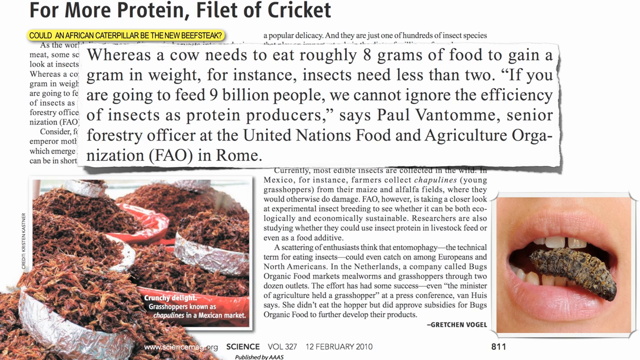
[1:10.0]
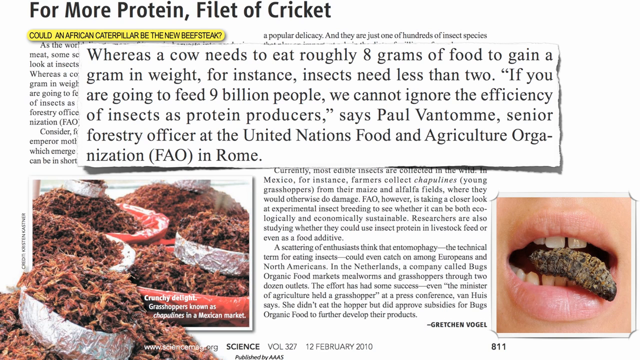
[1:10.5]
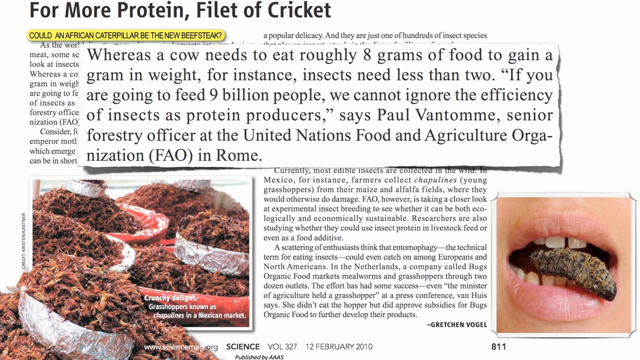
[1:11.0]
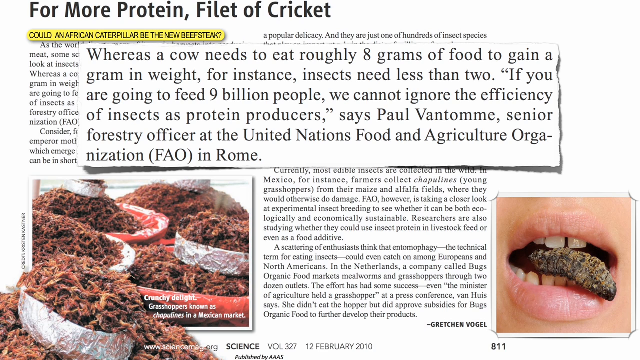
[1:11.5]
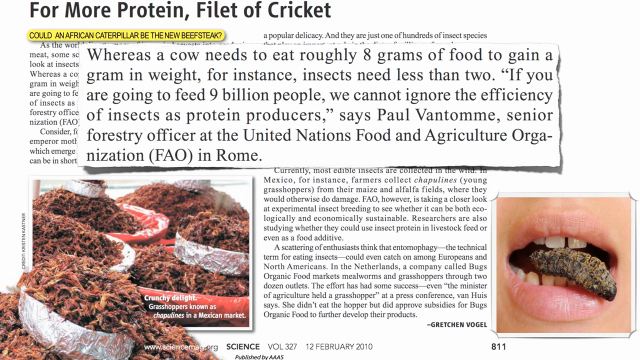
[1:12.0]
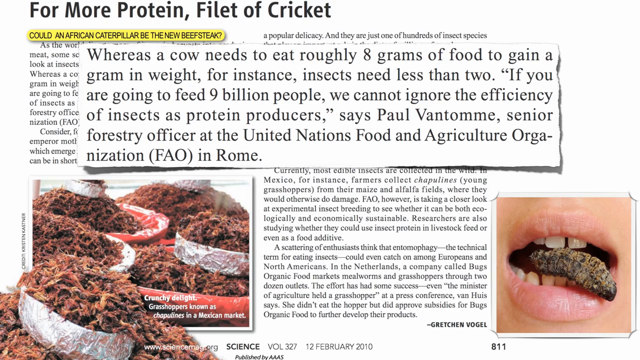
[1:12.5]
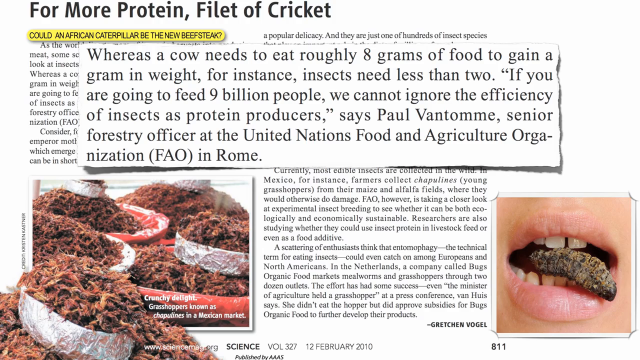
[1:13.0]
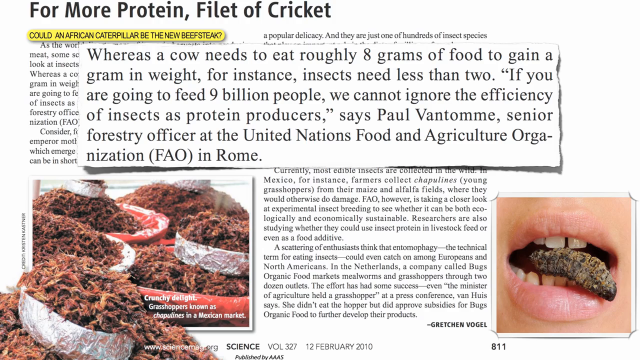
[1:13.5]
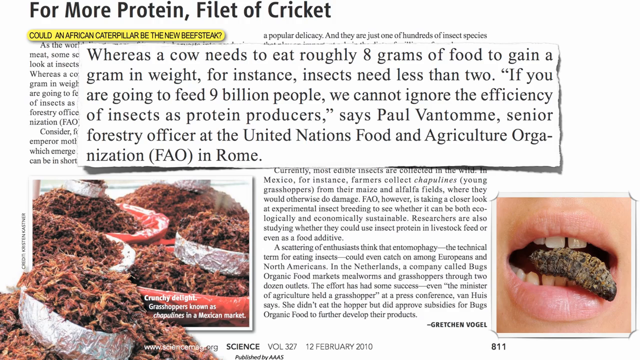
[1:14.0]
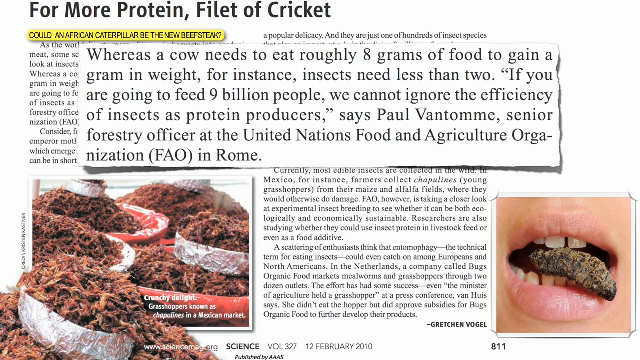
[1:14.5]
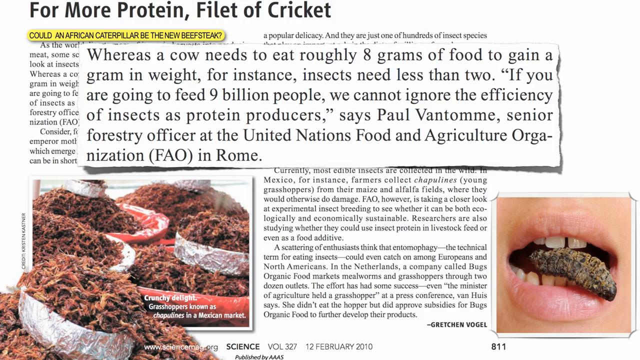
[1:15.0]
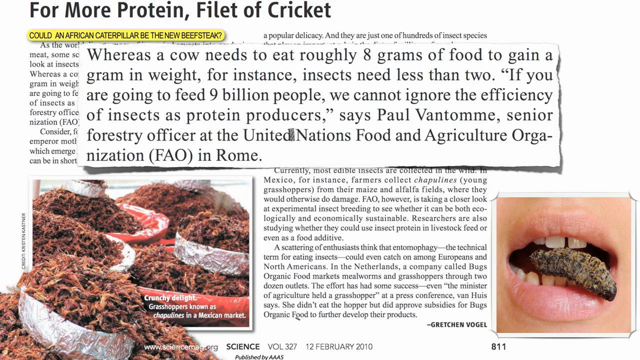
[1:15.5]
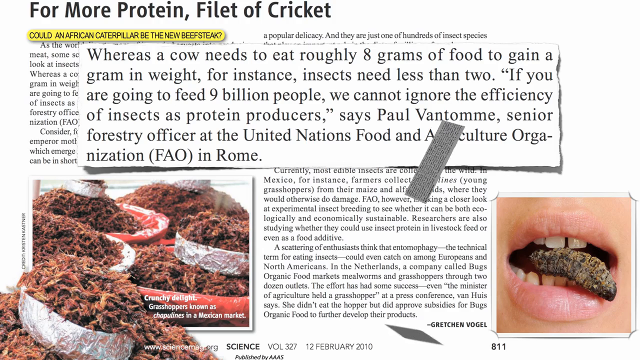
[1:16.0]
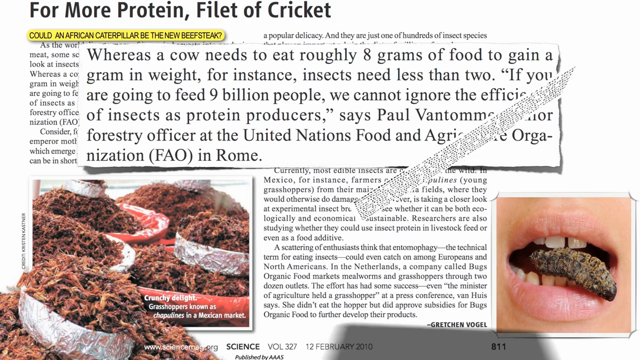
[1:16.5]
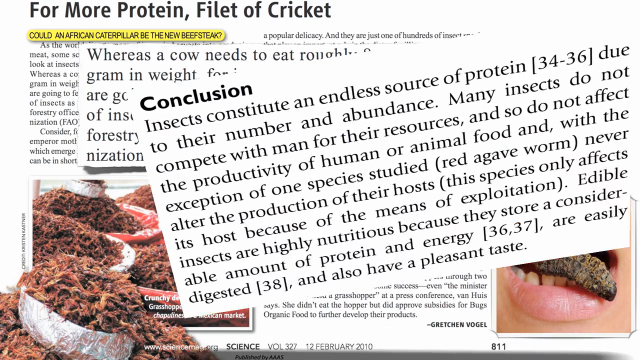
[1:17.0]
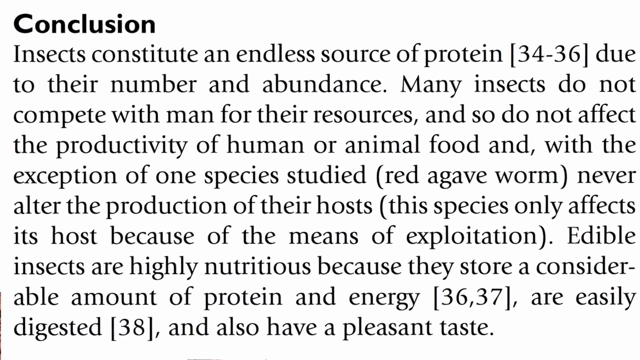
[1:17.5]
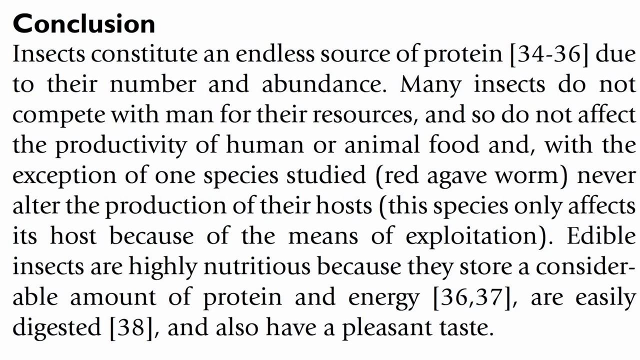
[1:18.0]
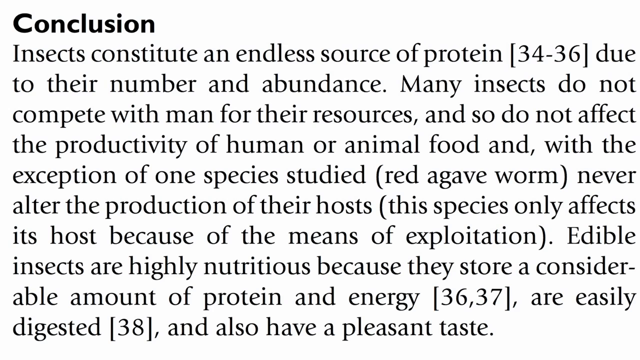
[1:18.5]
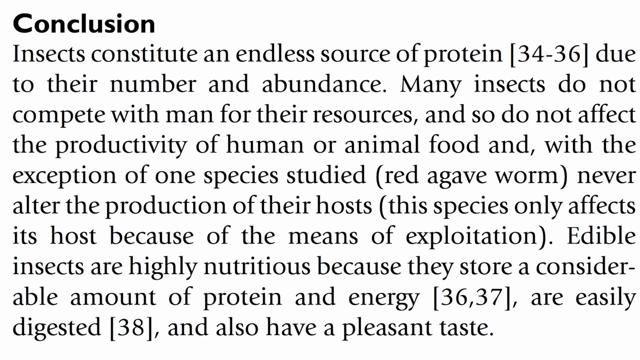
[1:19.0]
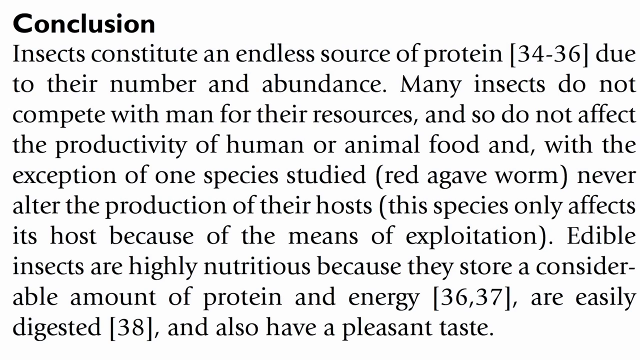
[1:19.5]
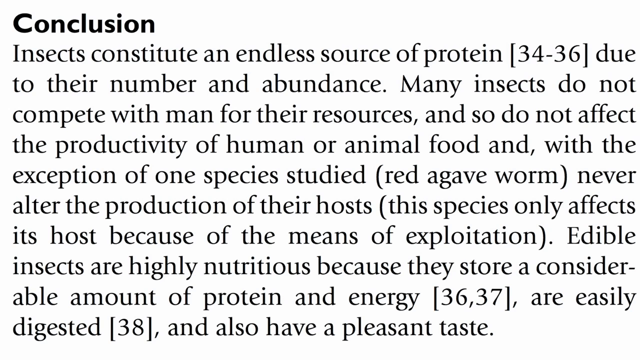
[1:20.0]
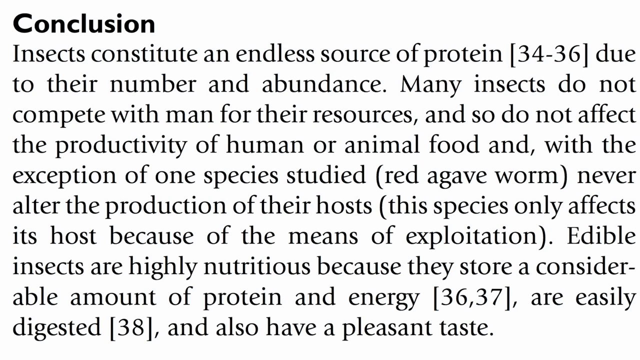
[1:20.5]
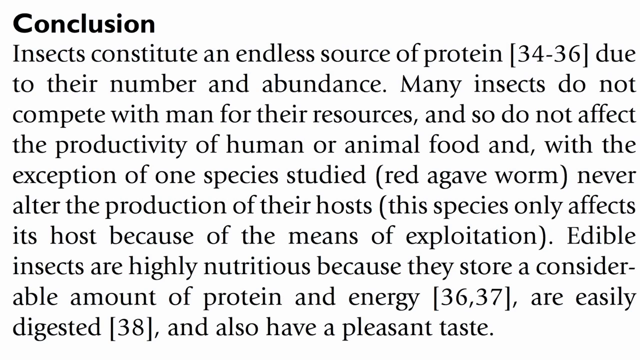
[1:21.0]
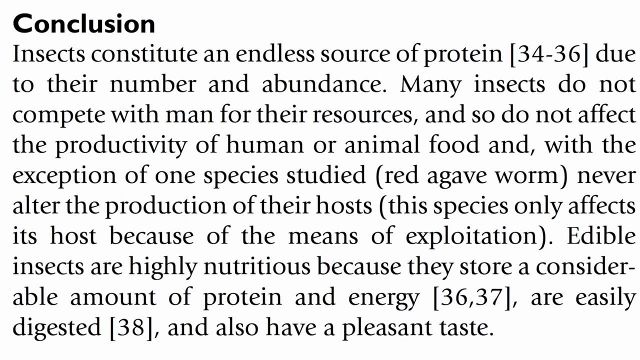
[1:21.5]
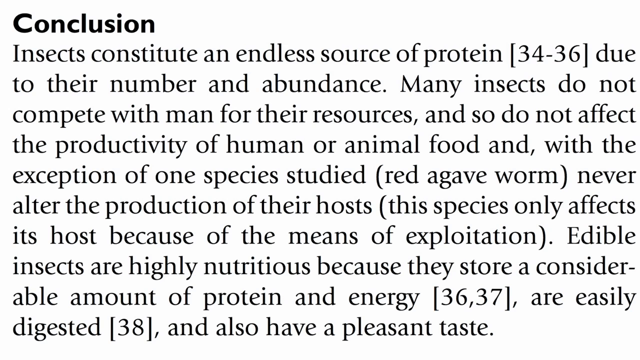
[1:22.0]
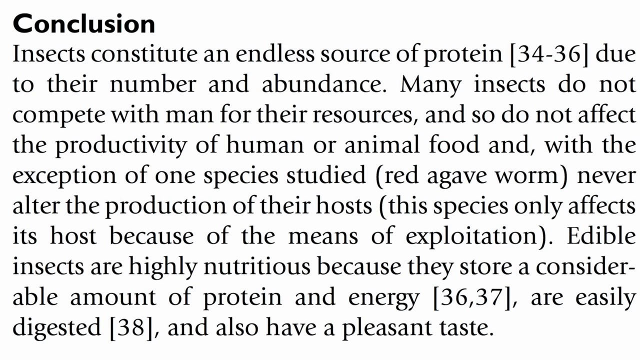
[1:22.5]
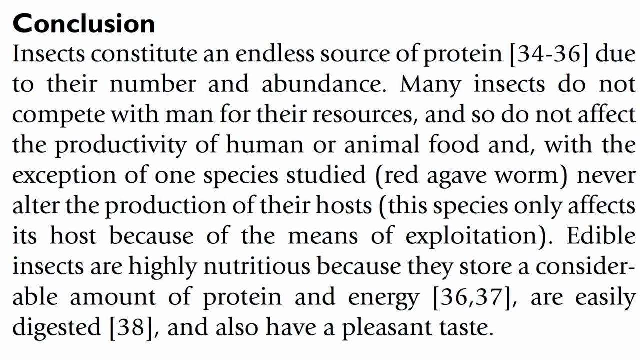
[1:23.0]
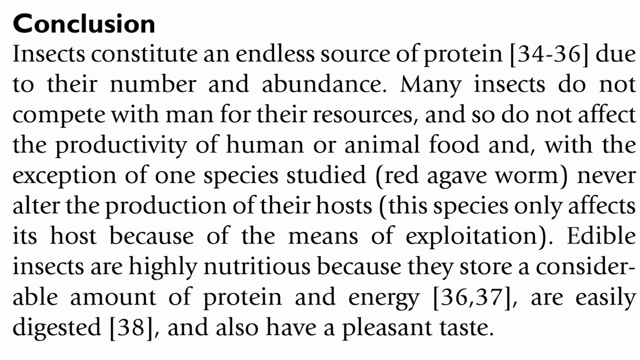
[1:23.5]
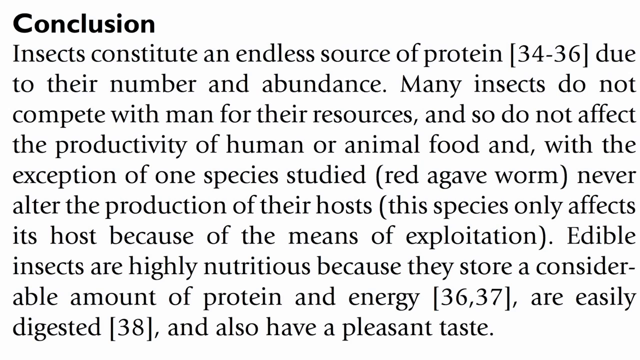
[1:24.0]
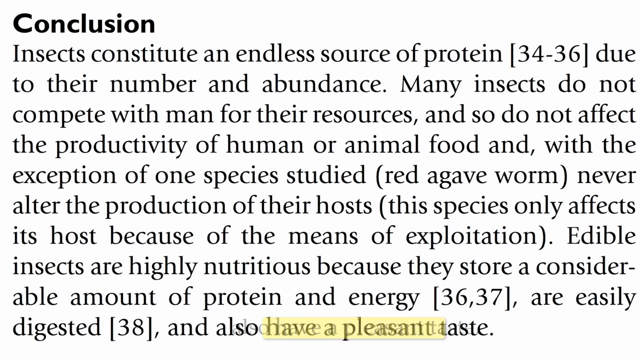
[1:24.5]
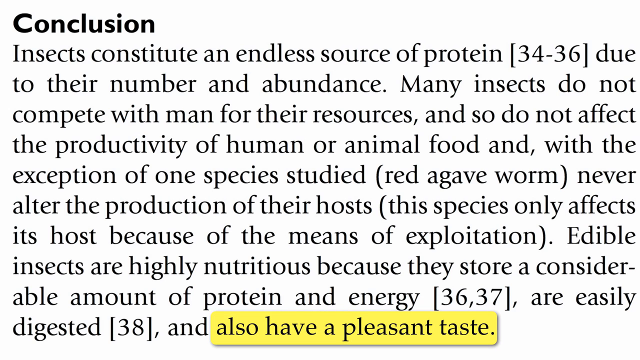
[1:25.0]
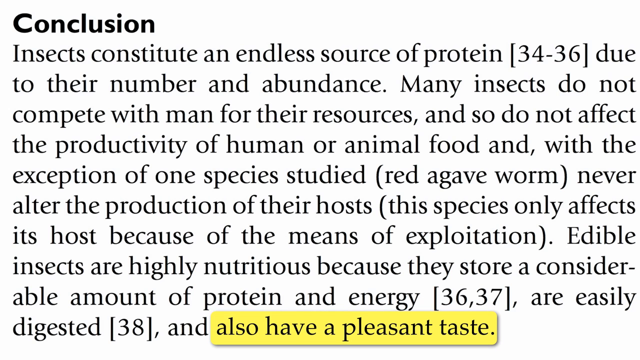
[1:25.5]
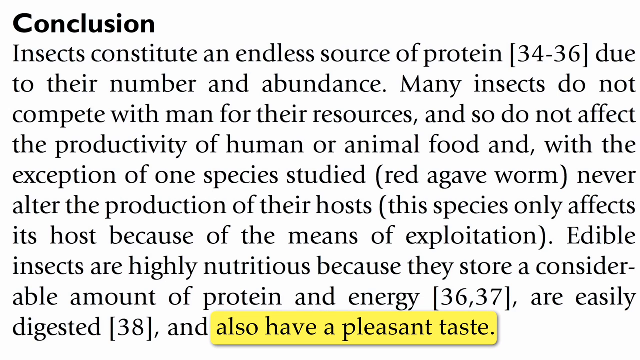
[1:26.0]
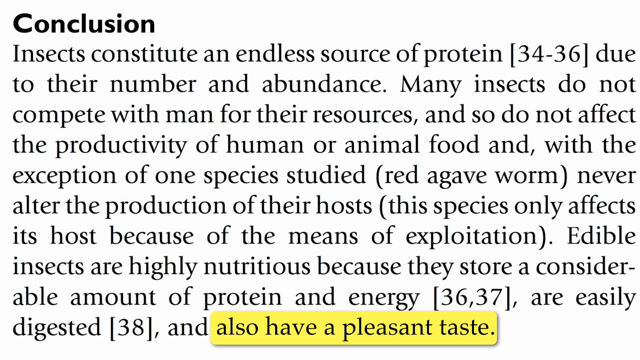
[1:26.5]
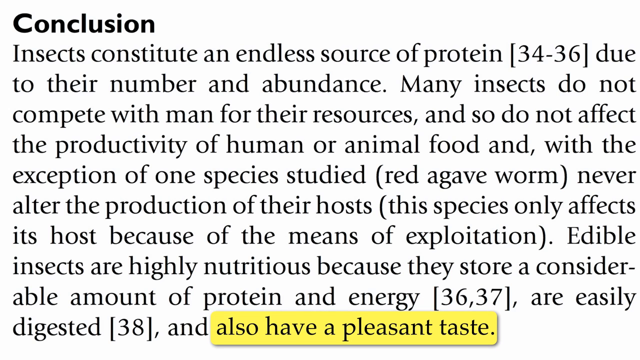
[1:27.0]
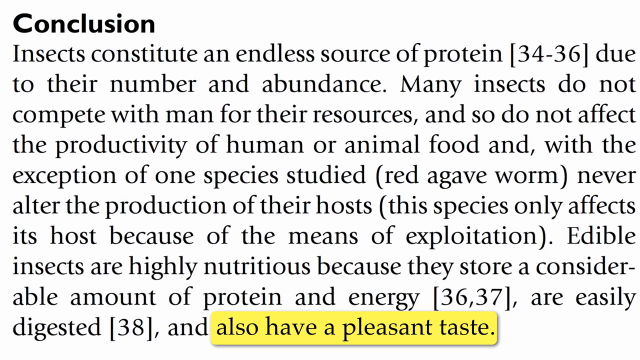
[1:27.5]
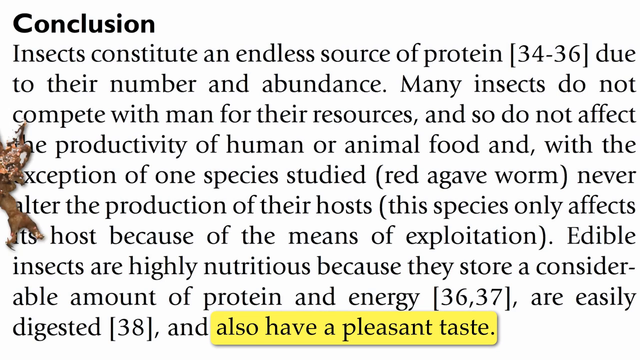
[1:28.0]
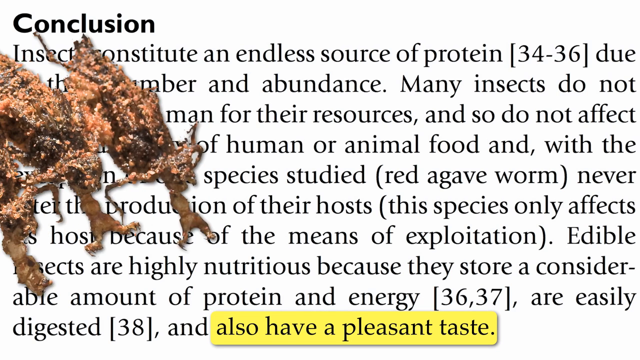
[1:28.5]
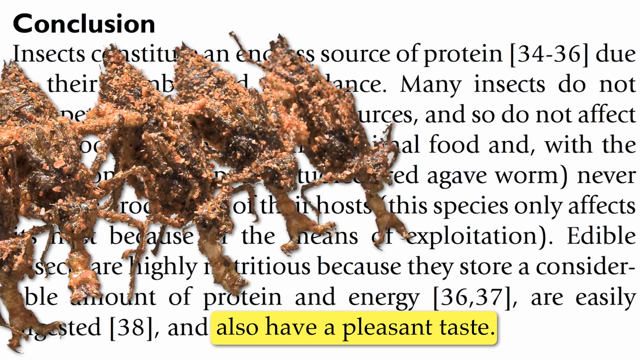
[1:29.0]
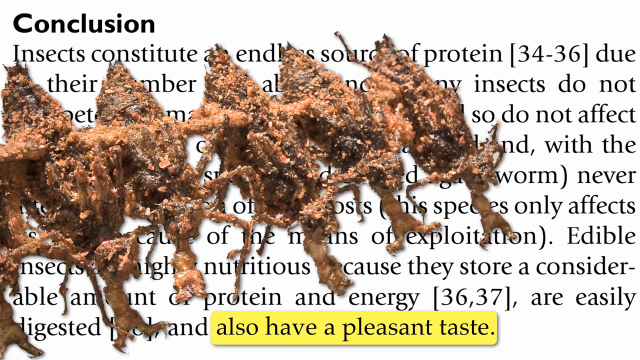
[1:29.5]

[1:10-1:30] The article headed "for more protein filet of cricket" remains, with a rectangle covering its top portion that reads: "whereas a cow needs to eat roughly eight grams of food to gain a gram in weight. For instance, insects need less than two. If you are going to feed nine billion people, we cannot ignore the efficiency of insects as protein providers, says Paul Ventome, senior forest officer at the United Nations Food and Agricultural Organization in Rome." A new page comes in from the center, somewhat turning and coming toward the camera. Across the top it says "conclusion" in dark, bold black letters on a white background, followed by a paragraph about the conclusion of eating insects. Down at the bottom, "also have a pleasant taste" is highlighted in yellow. Then about five grilled crickets come in from the left, all burnt, crispy-looking and brown.